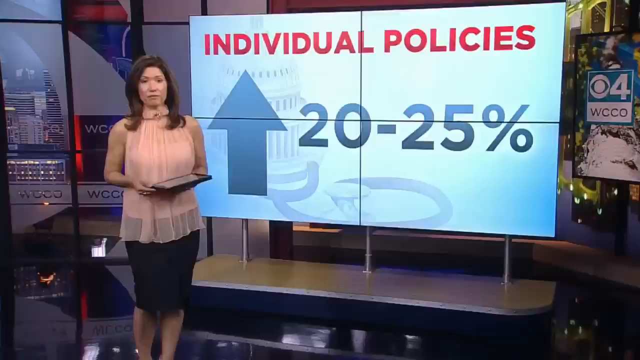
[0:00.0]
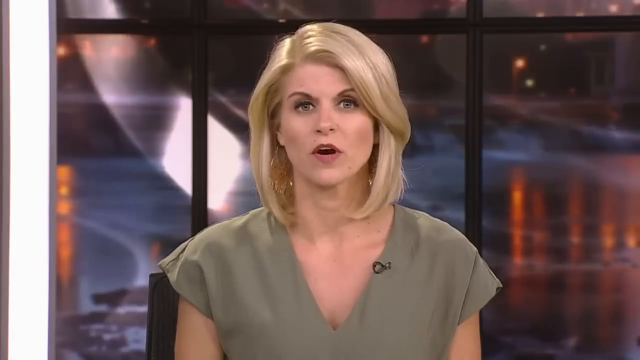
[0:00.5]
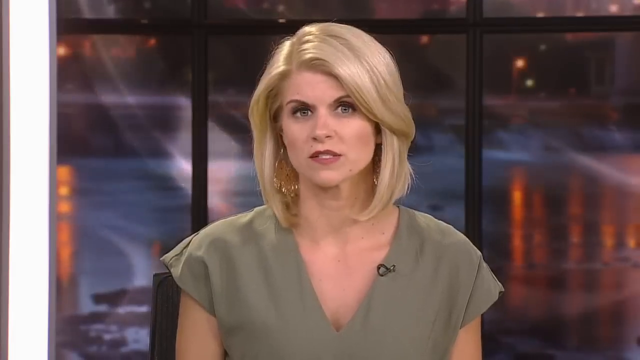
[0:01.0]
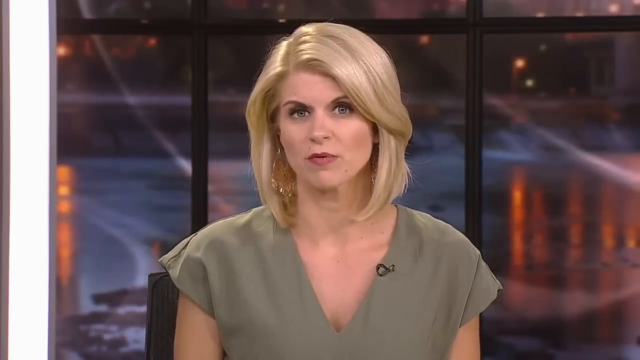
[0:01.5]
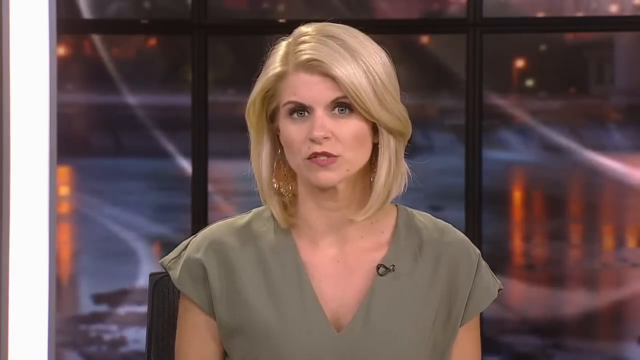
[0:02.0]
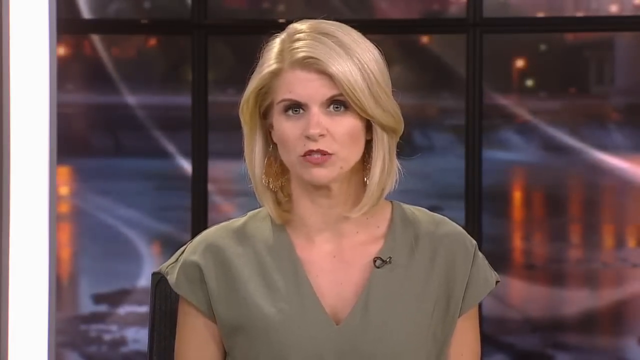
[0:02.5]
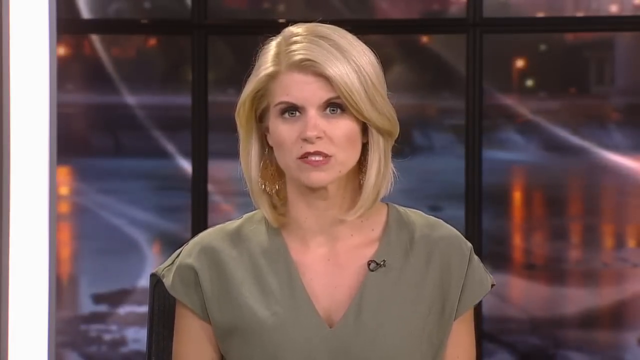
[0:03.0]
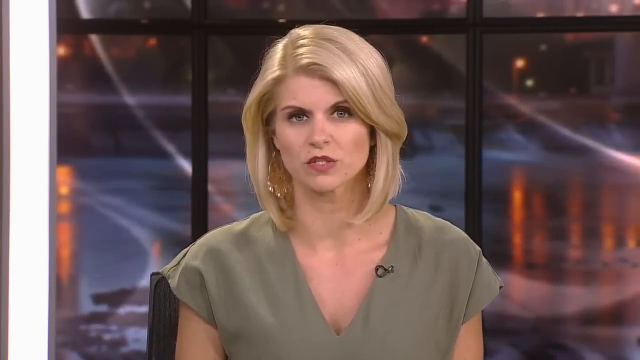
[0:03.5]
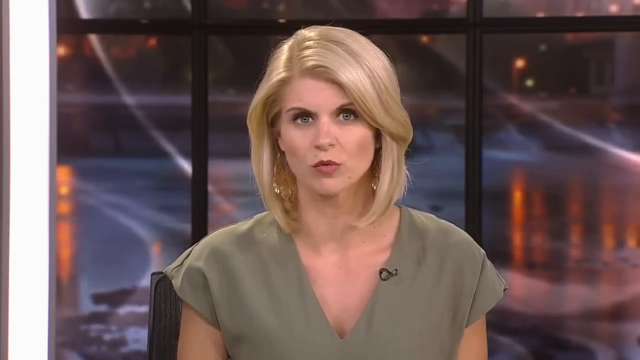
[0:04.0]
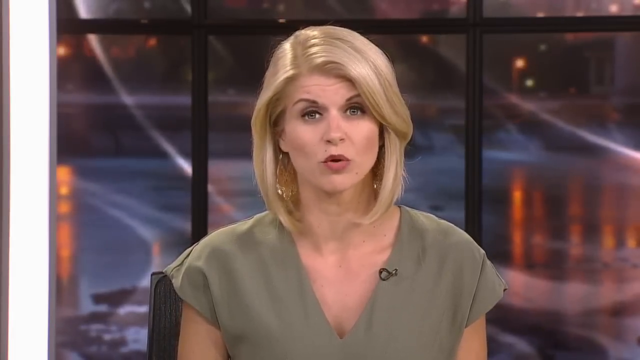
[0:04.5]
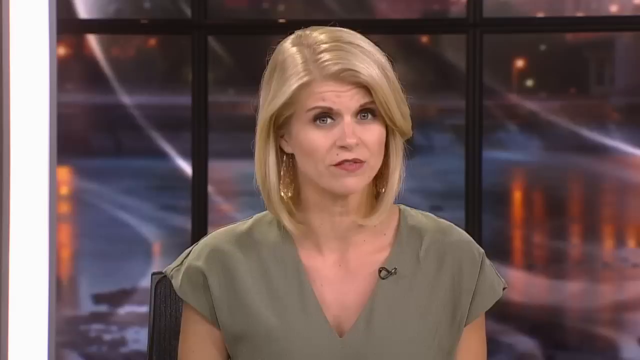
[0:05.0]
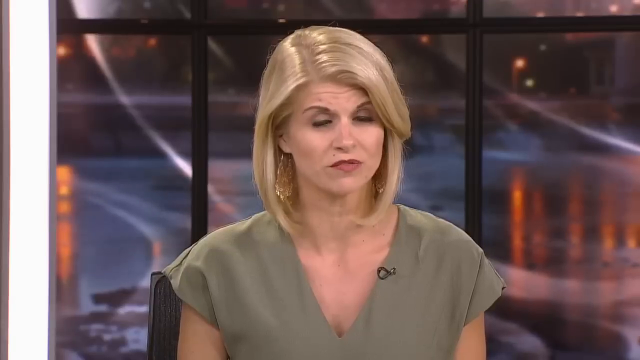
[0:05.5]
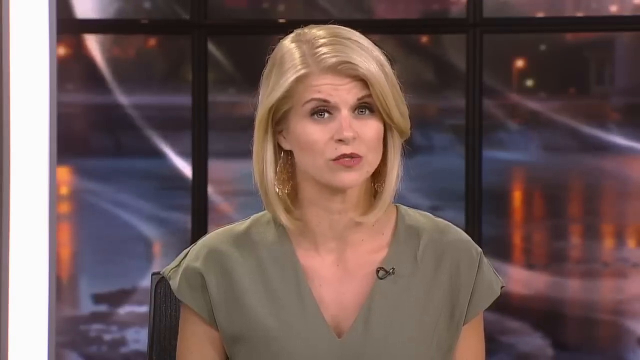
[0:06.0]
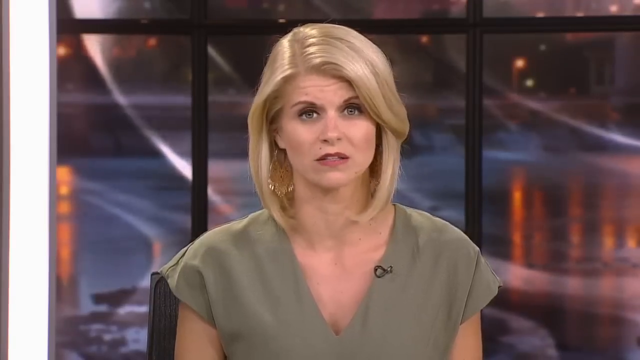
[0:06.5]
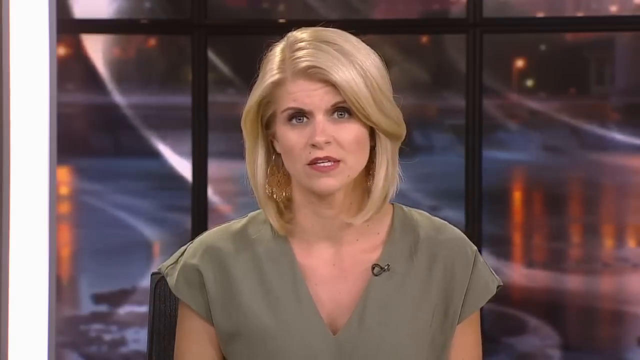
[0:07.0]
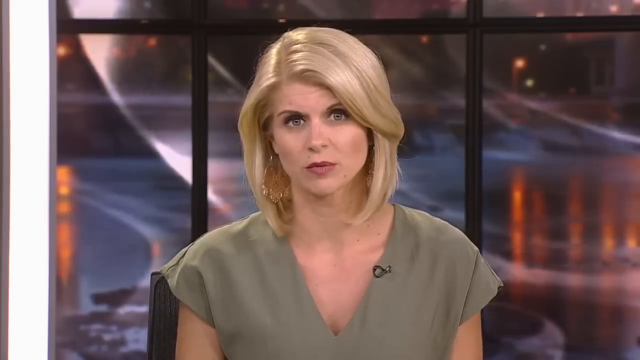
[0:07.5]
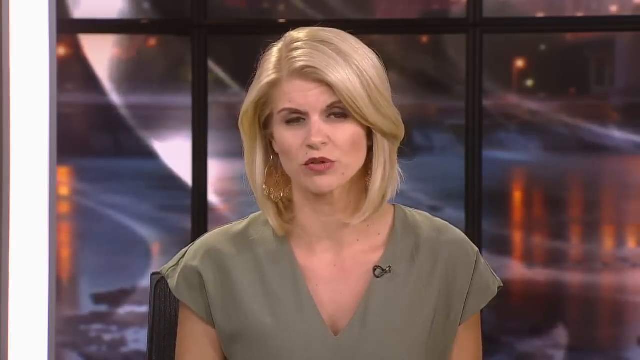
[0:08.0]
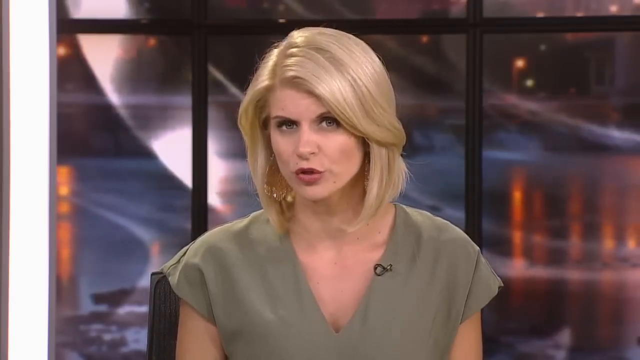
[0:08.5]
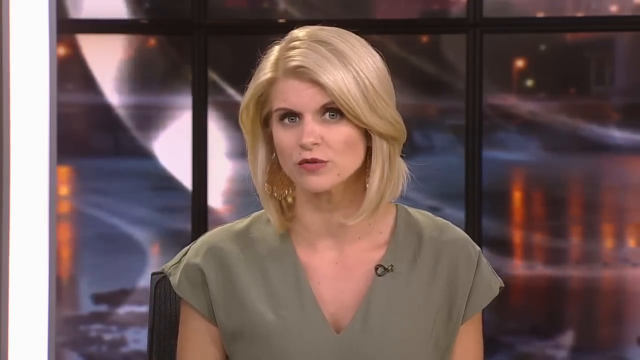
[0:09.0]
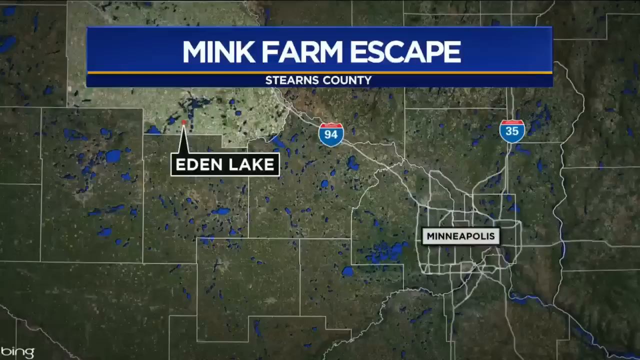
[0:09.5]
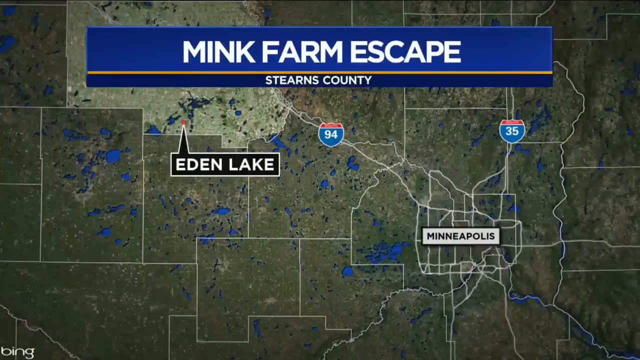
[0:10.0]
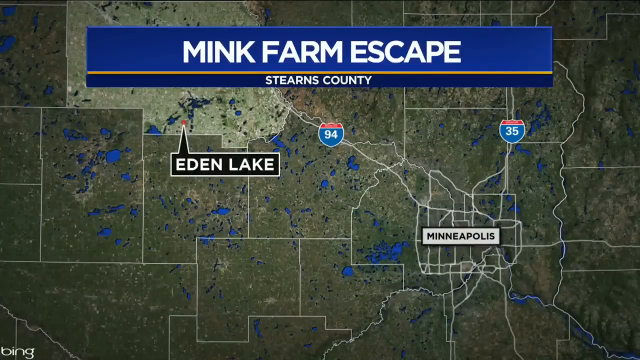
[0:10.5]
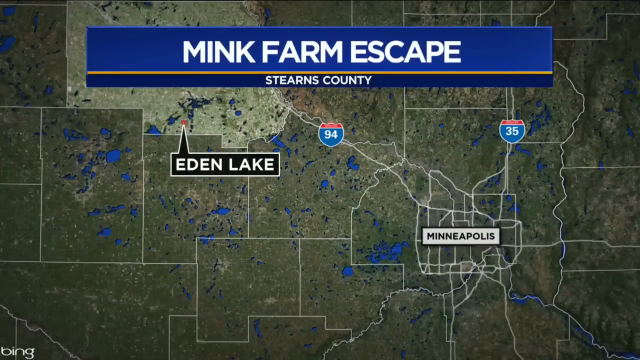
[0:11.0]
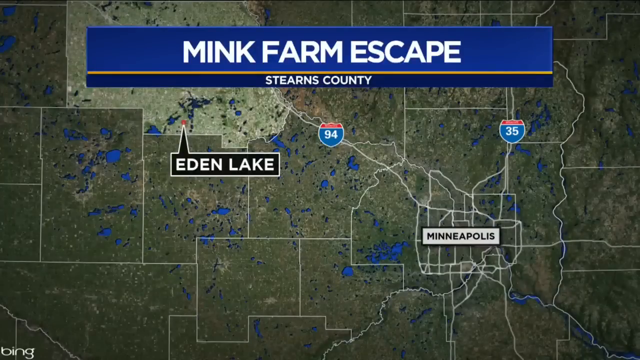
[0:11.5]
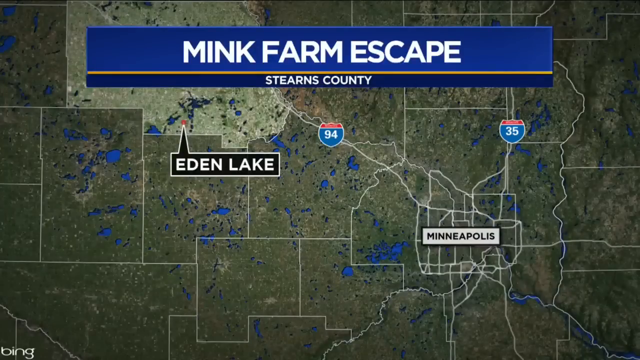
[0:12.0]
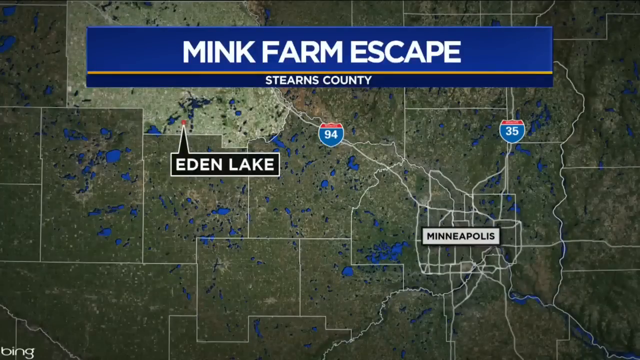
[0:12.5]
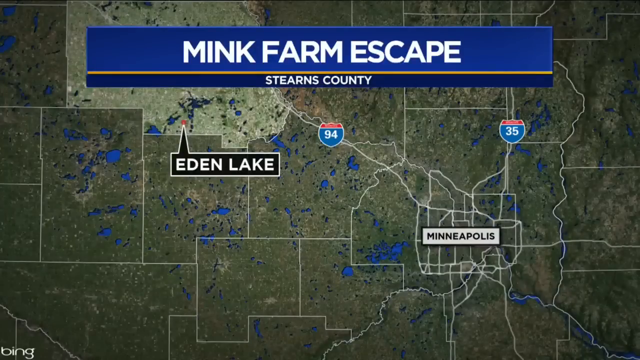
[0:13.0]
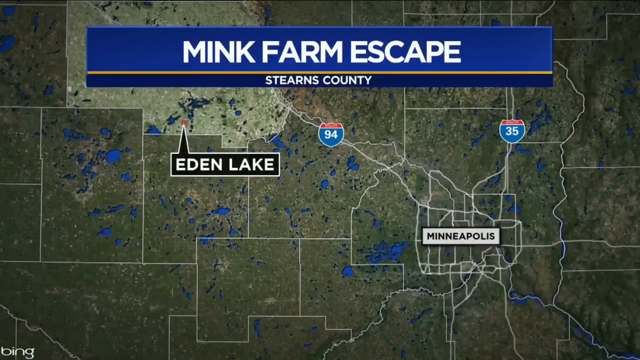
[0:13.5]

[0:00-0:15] A blonde female news anchor wears a deep green V-neck shirt and spangly gold earrings. She is sitting with a backdrop that looks like it may be a night sky setup, and she is talking. The video then cuts to what looks like a map of Minnesota, with "Mink farm escape, Stearns County" at the top. A specific location is marked and labeled "Eden Lake," apparently where the mink farm escape happened. The map also shows markers for Route 94 and Route 35 and shows where the location is in relation to Minneapolis. It is a very detailed geographical map showing the bodies of water in the area. No other newscasters are visible.